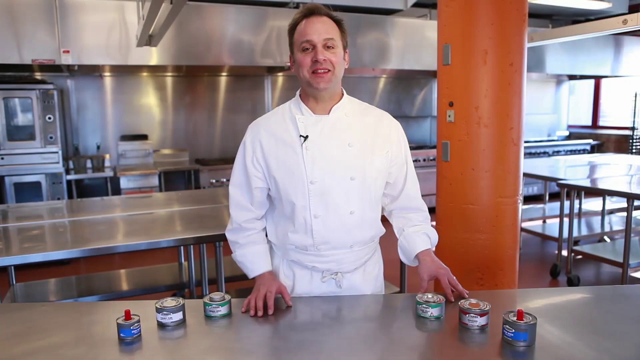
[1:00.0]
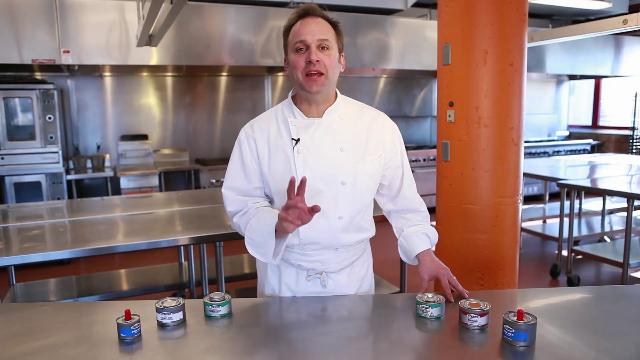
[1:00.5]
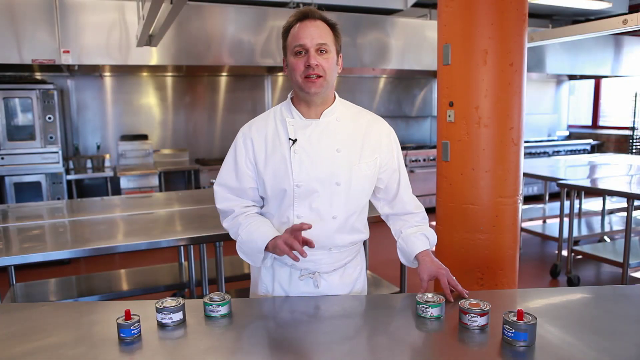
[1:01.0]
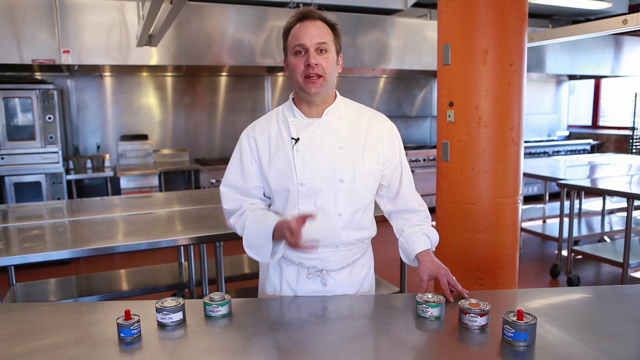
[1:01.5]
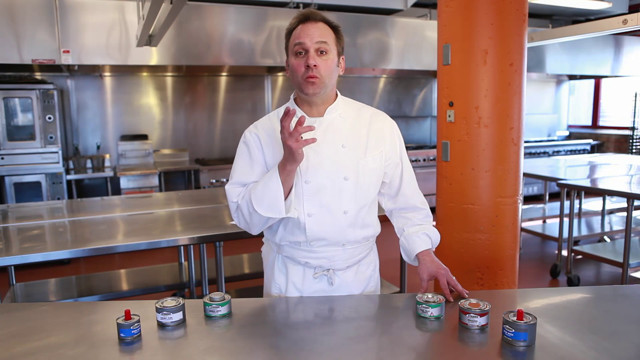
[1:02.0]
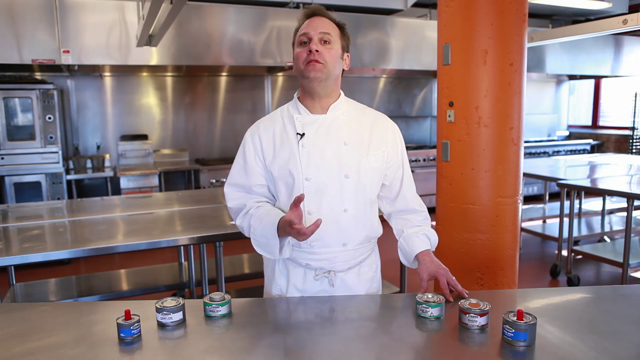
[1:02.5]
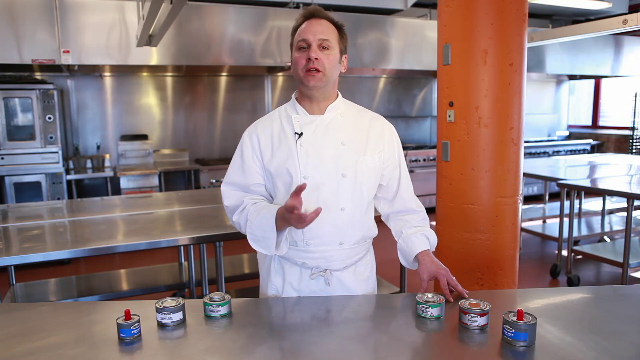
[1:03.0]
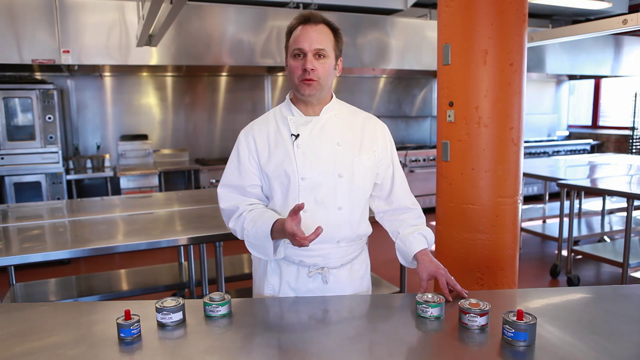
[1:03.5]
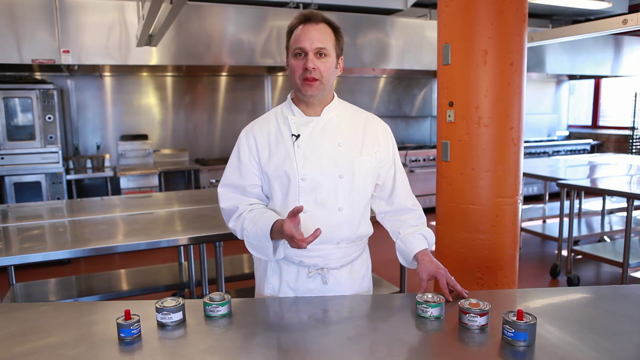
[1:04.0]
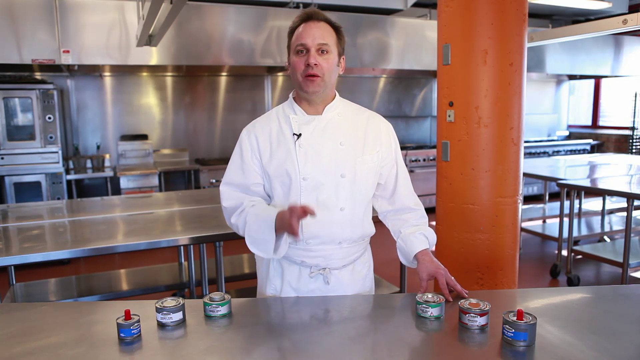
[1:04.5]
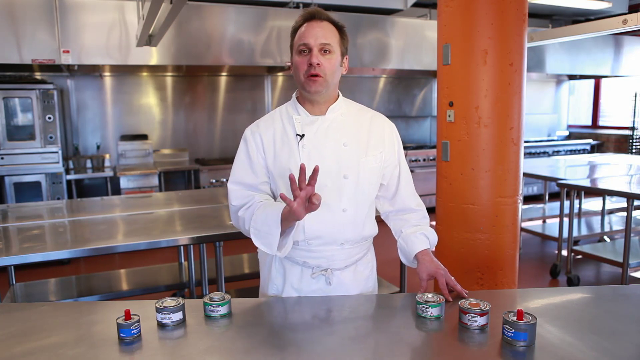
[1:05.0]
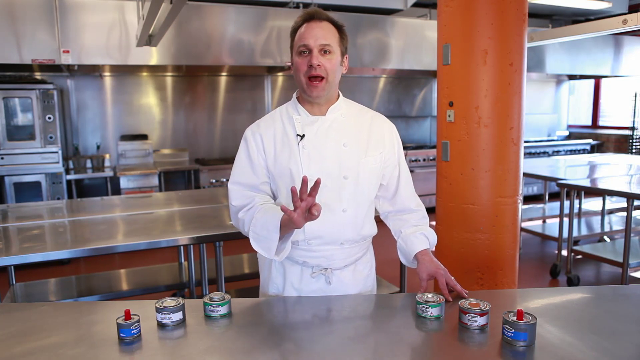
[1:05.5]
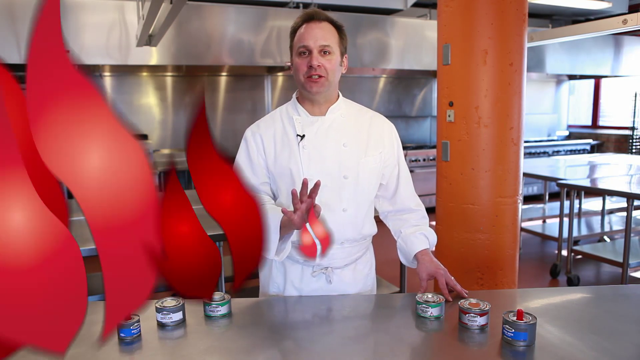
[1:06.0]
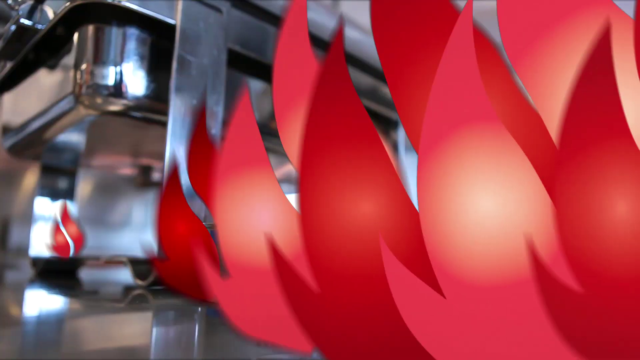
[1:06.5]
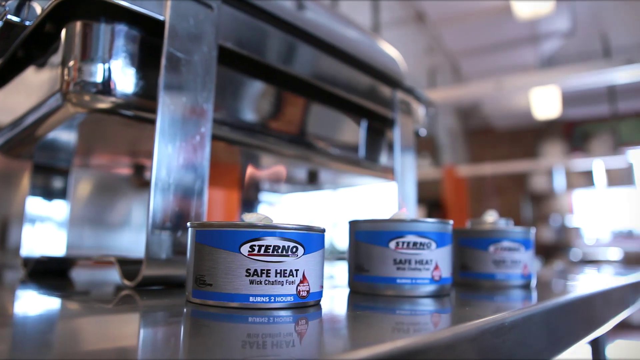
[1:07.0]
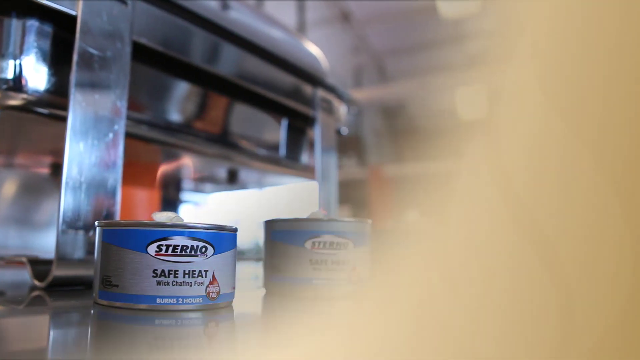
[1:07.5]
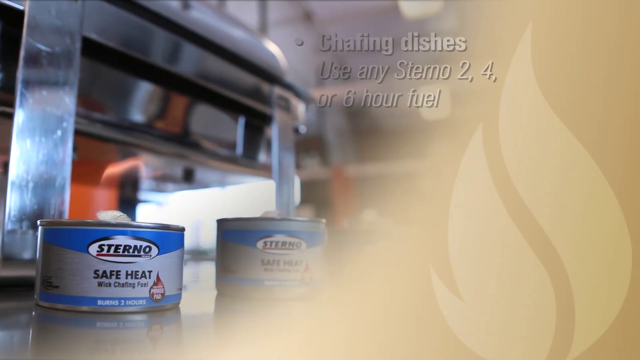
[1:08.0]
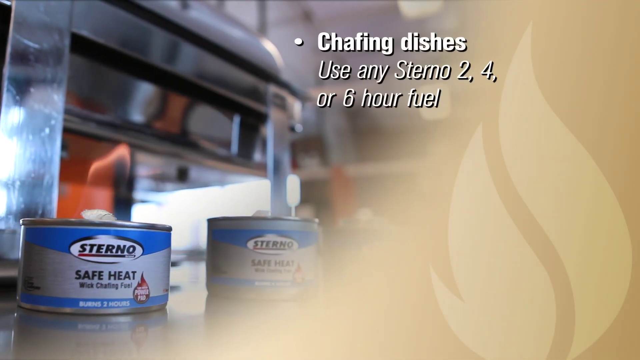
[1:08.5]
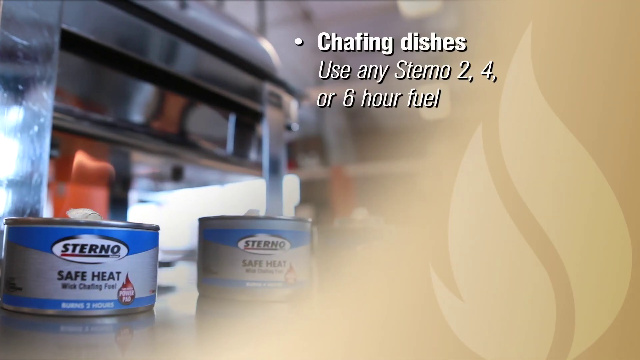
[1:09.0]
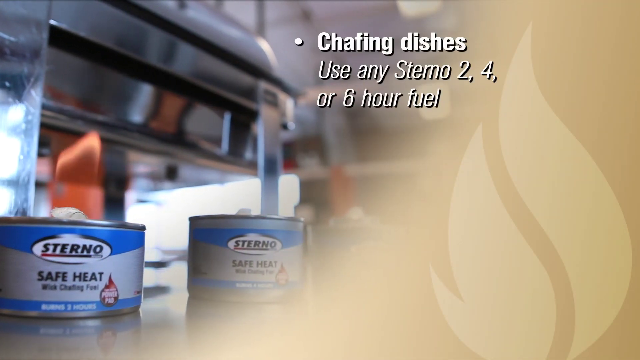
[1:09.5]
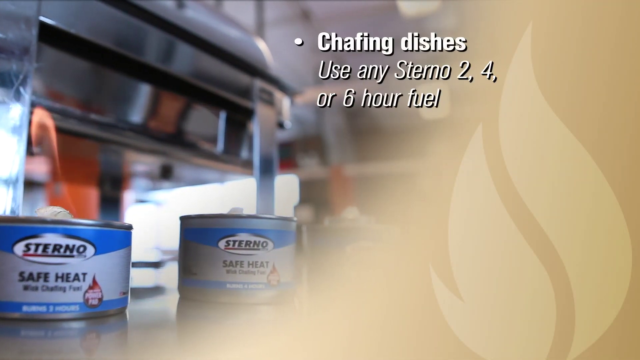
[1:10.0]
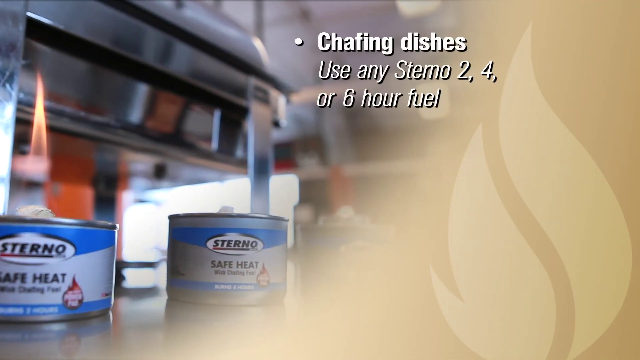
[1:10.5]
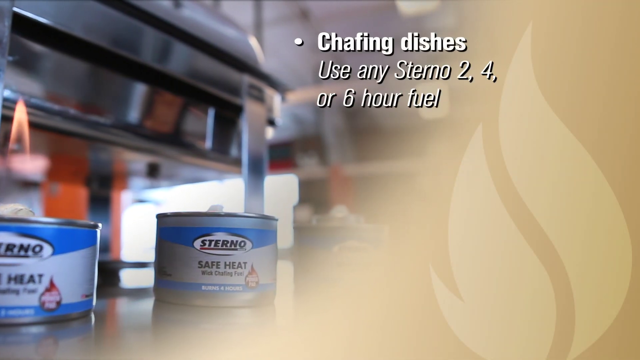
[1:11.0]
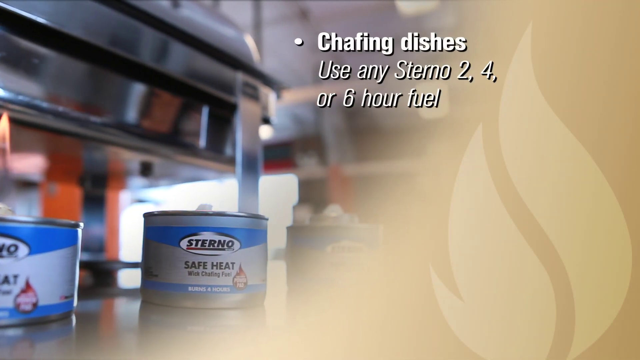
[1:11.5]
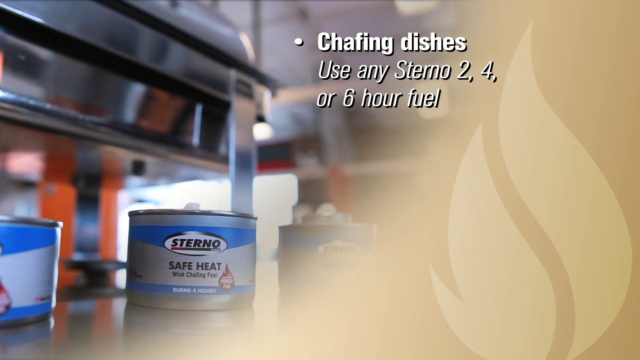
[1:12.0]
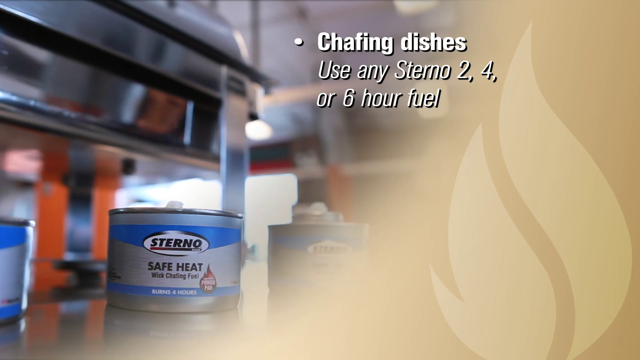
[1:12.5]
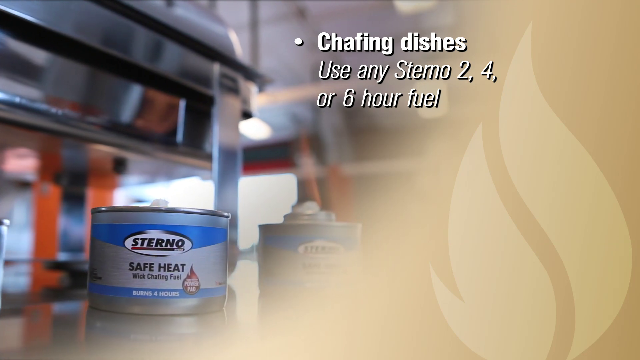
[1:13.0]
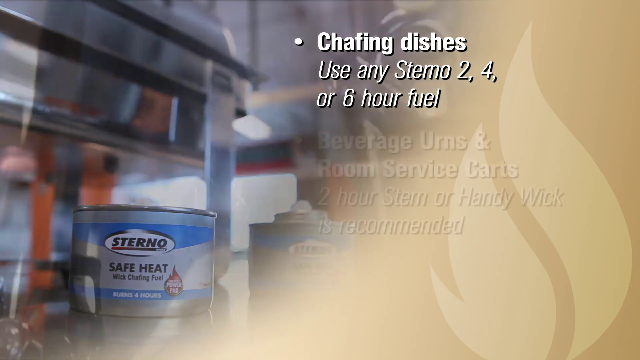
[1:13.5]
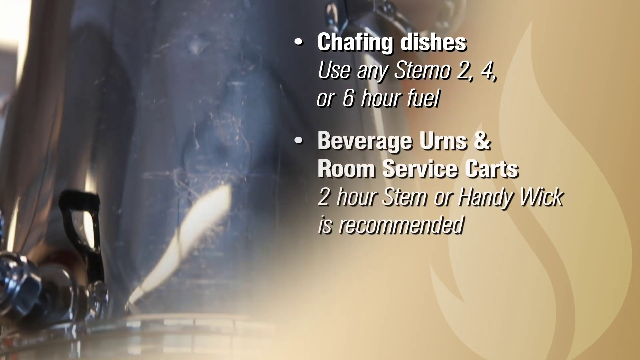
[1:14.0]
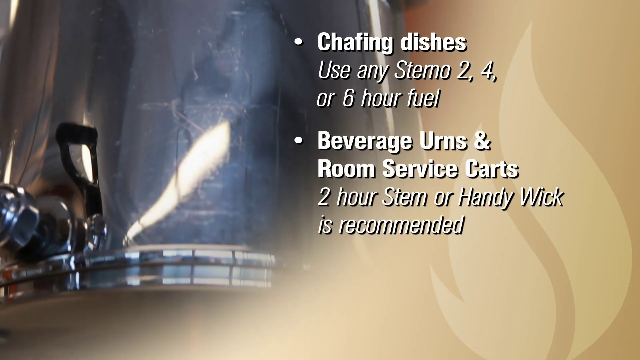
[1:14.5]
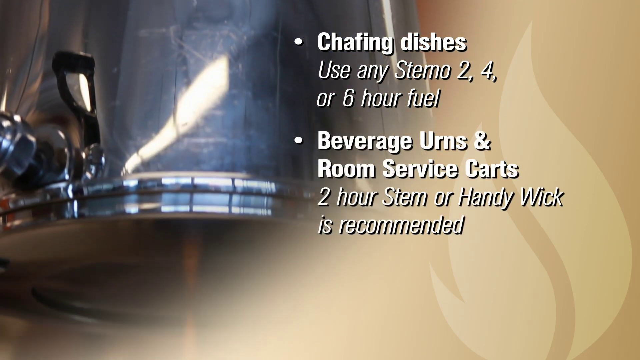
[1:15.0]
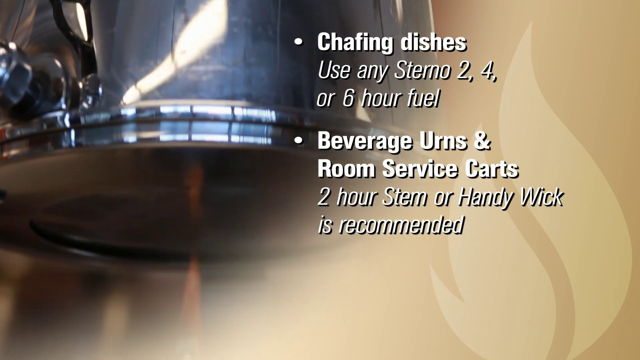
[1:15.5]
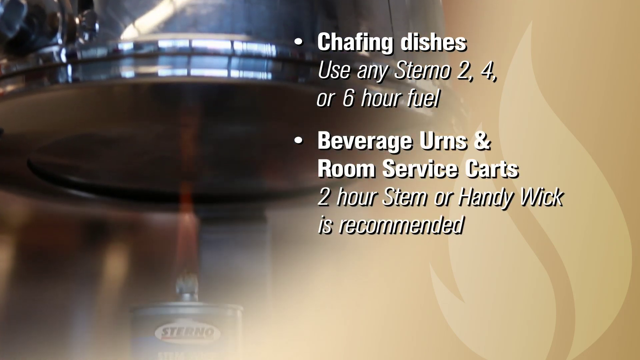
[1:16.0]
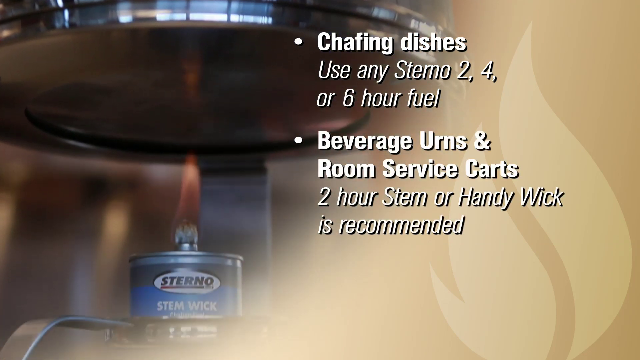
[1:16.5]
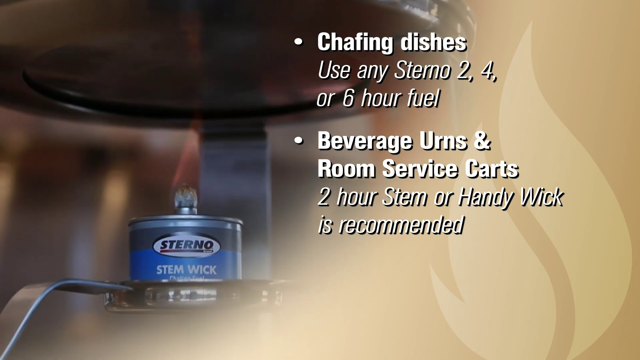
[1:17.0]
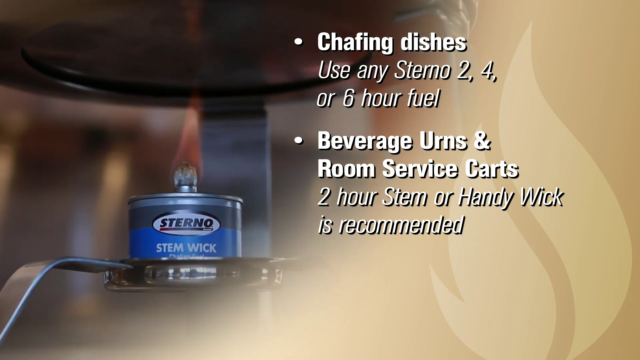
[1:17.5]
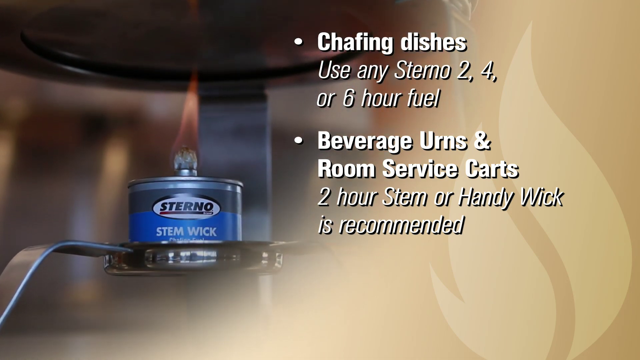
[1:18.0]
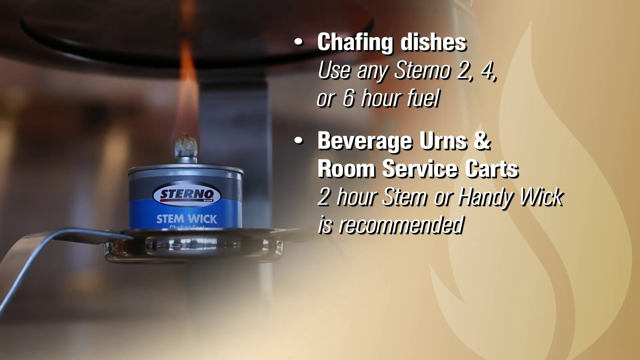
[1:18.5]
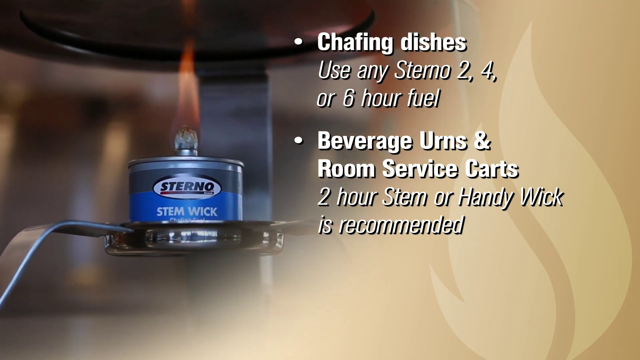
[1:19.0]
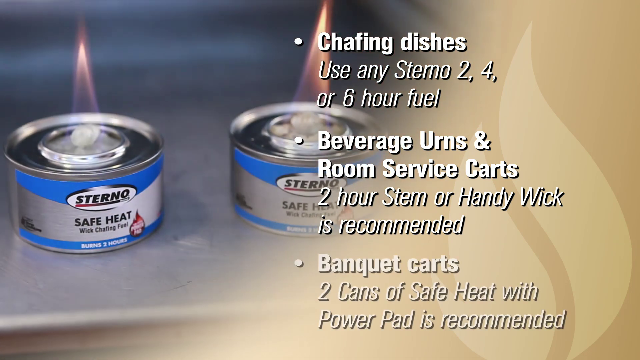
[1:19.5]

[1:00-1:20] A Caucasian chef in a white chef's outfit with a white apron speaks to the camera, gesturing with his right hand. Behind him is a commercial kitchen, and he stands in front of a stainless steel table holding six cans of Sterno. The scene changes to a commercial kitchen in the background with Sterno safe heat at the bottom of the screen, smoke on the right side of the screen, and another Sterno can peeking out over the smoke in the center of the screen. A bullet point of text appears right of center at the top of the screen reading "chafing dishes using any Sterno 2, 4, or 6-hour fuel", followed by a second bullet point, "beverage urns and room service carts, two-hour Sterno or handy wick is recommended." The screen moves down to show a can of lit Sterno and a lit blue and white can labeled "stem wick", which now sits beside the two bullet points. The scene then changes to two lit Sterno cans on the left side of the screen with the same bullet points of text on the right side.